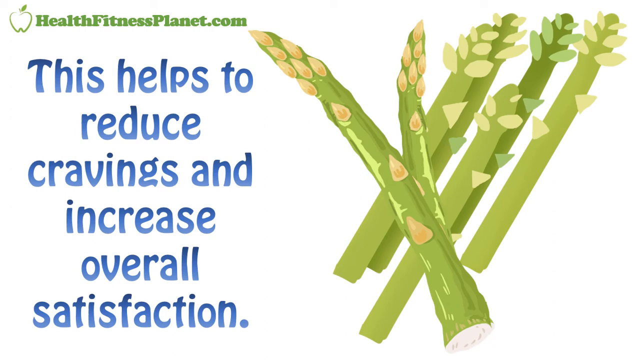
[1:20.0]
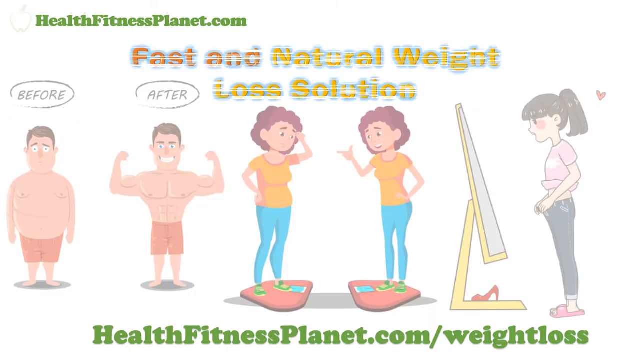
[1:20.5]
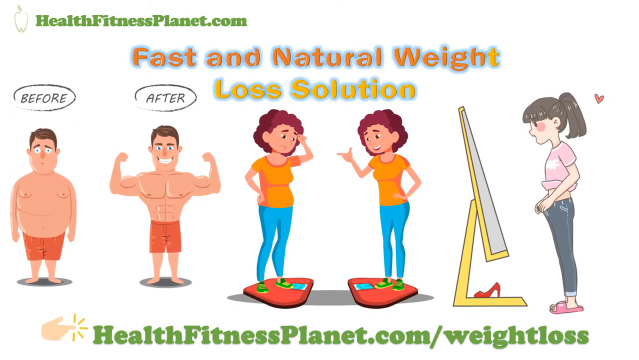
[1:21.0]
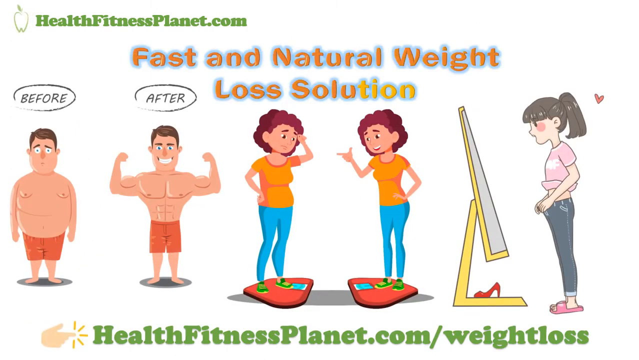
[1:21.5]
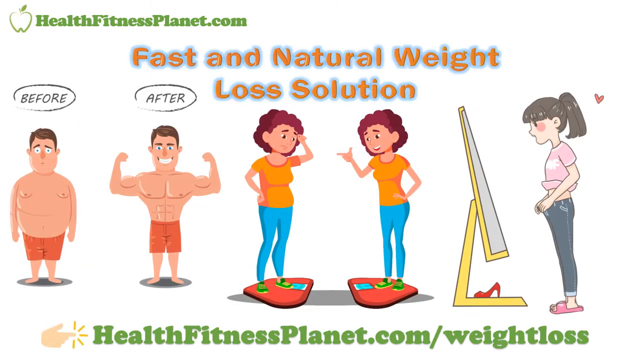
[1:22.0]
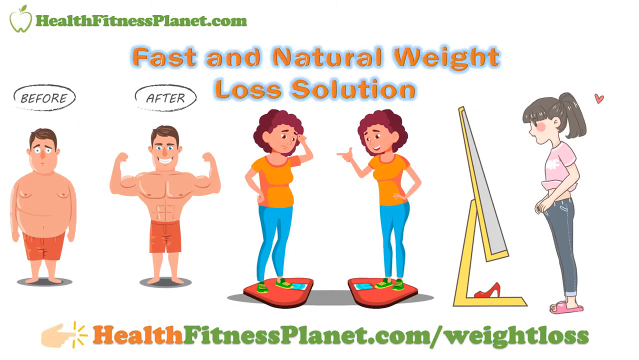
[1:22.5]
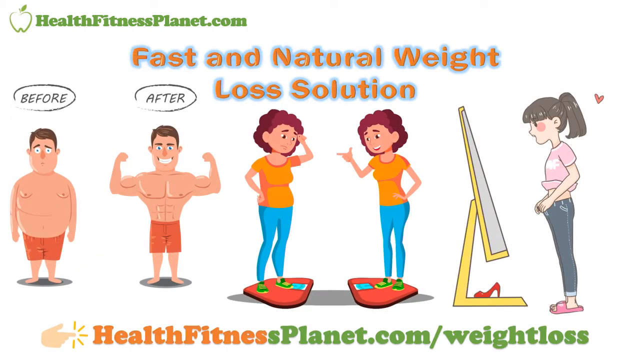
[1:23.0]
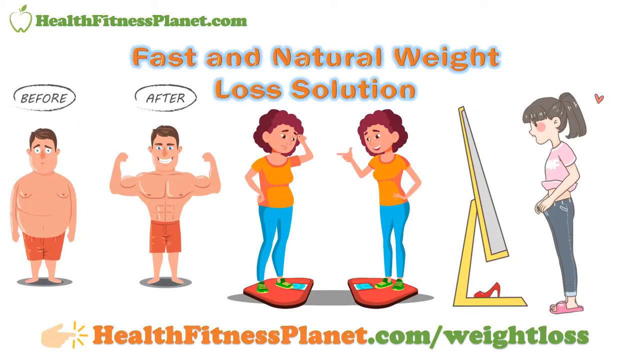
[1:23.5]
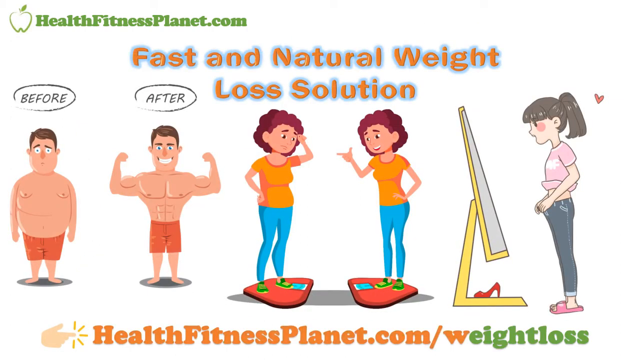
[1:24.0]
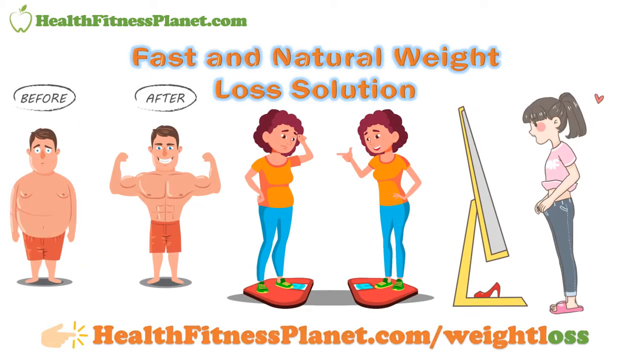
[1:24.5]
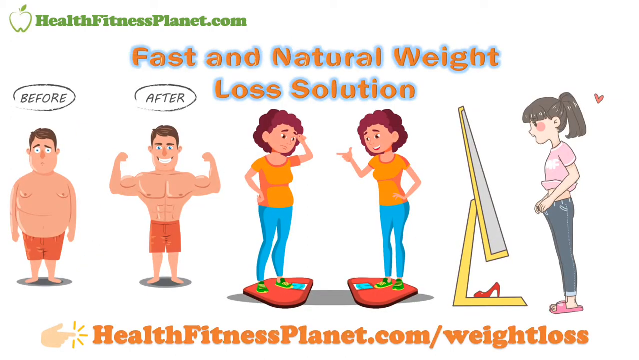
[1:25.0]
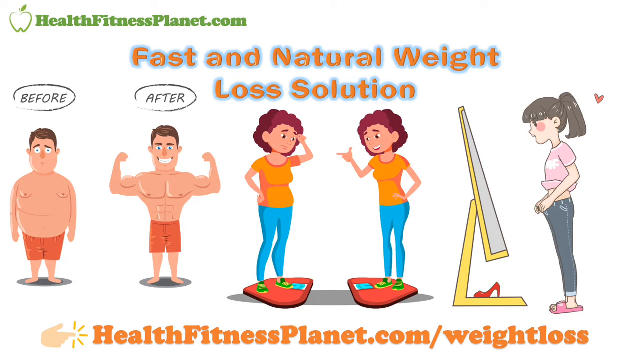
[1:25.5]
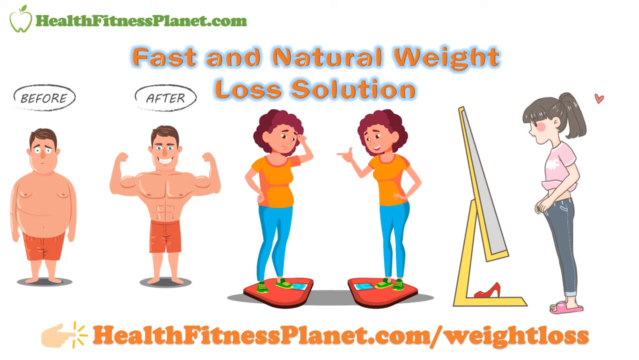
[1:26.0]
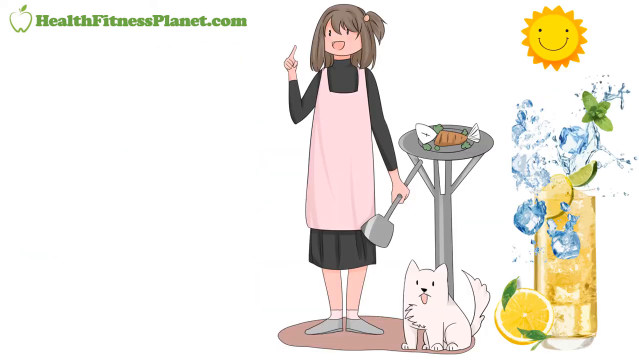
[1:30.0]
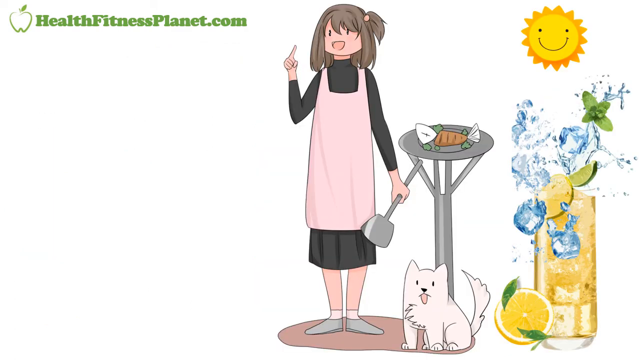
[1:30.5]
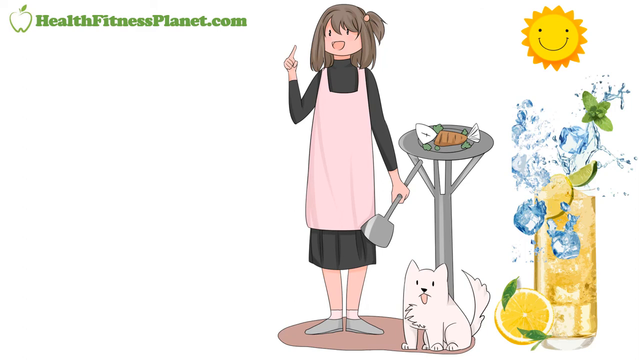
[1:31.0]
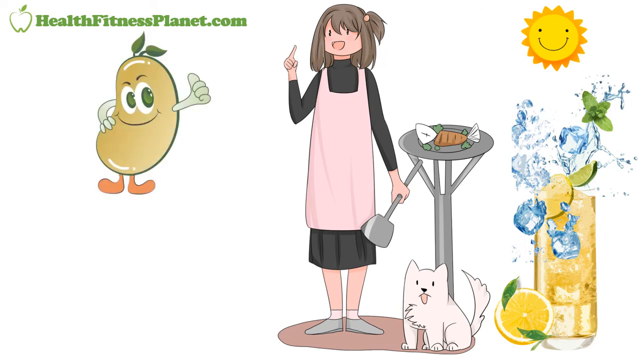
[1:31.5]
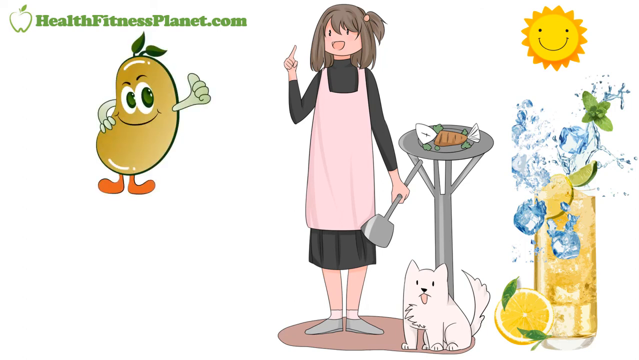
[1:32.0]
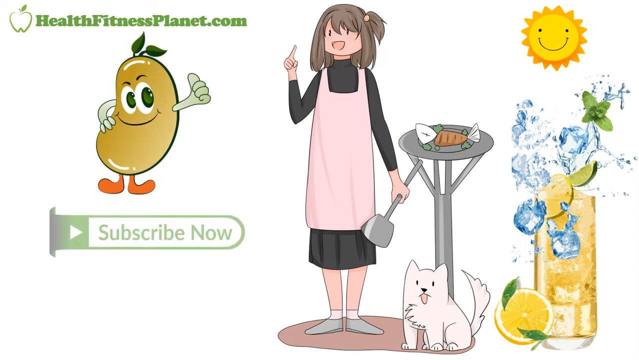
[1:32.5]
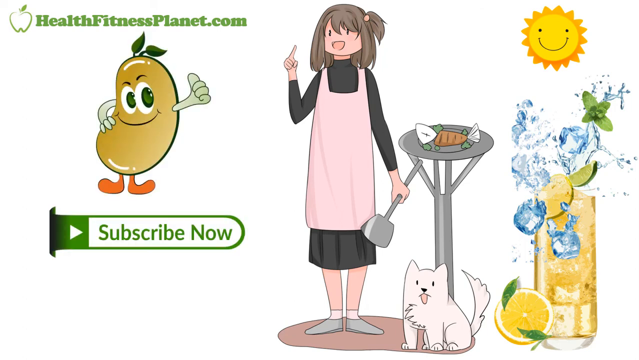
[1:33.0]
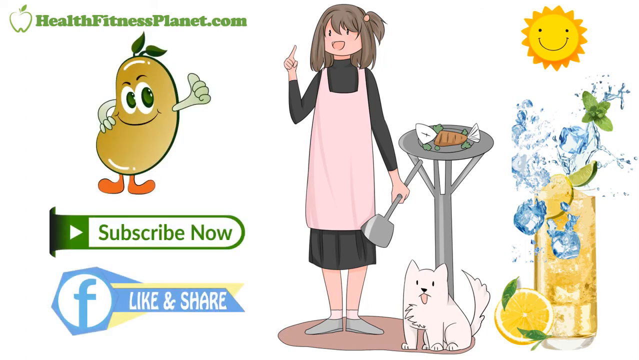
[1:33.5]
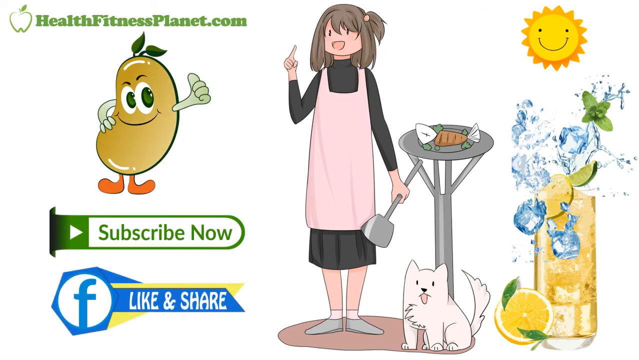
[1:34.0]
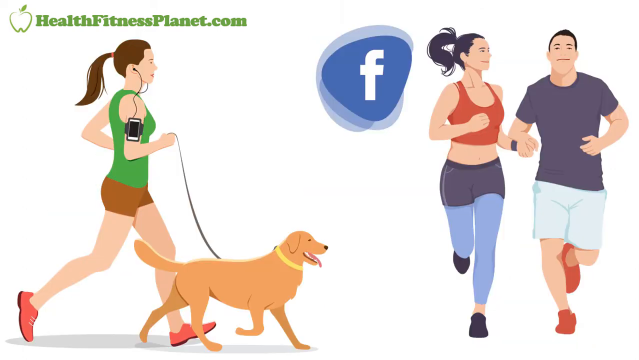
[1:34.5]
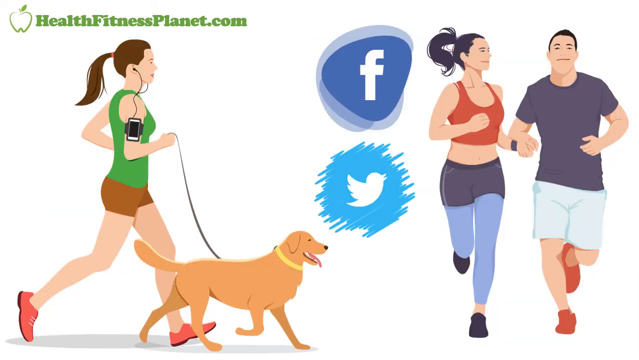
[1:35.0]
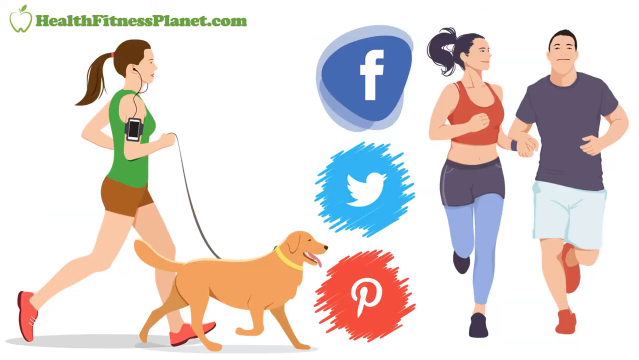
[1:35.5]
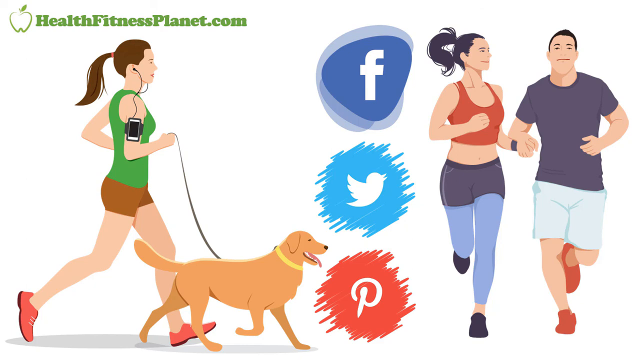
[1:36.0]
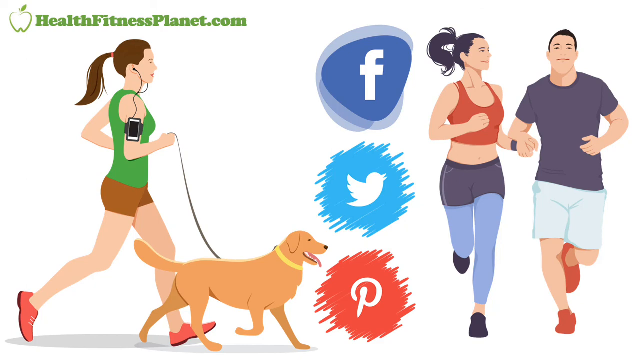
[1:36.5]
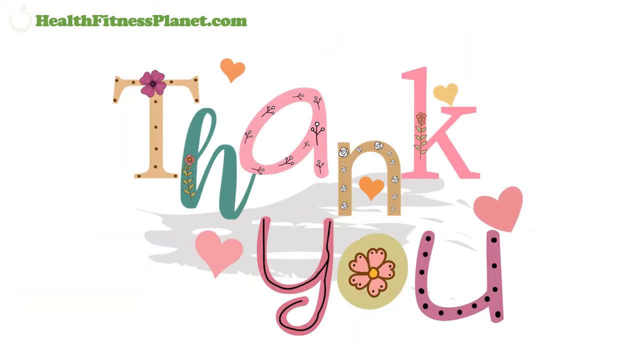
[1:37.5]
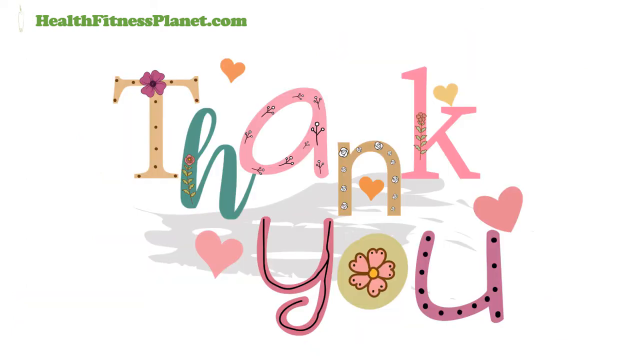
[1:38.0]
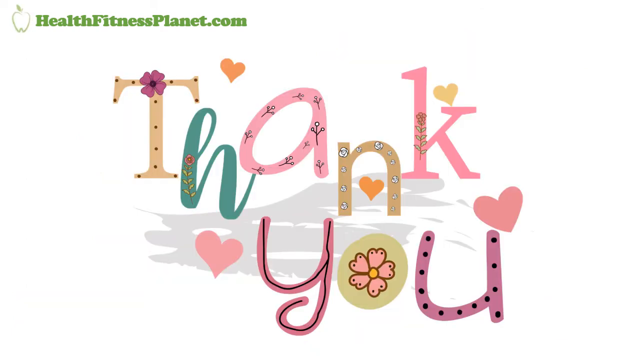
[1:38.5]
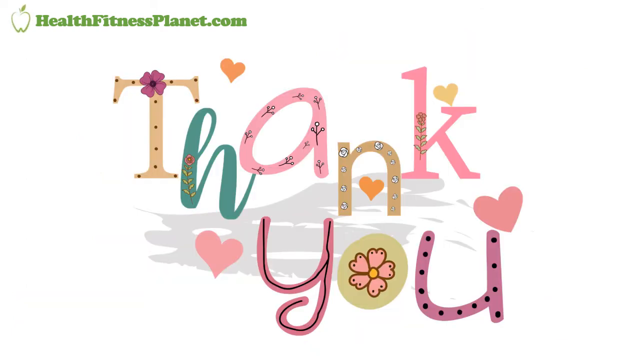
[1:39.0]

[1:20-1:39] A cartoon drawing at the top is labeled "Fast and natural weight loss solution," with five cartoon figures below. On the far left are two illustrations of the same man, with "before" and "after" above their heads from left to right. The before picture shows a man with a huge belly wearing swimming trunks, with an unhappy expression; under the after tag is the same man with a well-defined torso, flexing his arms with a big smile. In the center are the two figures of the women from the beginning of the video, in orange shirts and blue pants, standing on two sides of a scale that is now equal. On the right is a young girl with a dark ponytail, seen in profile, wearing a pink shirt and gray pants and holding out the waistband of the pants to show how much weight she has lost. She stands in front of a mirror on which stands a single red high heel, and there is a little heart next to her ponytail. The image then switches to healthfitnessplanet.com with the apple logo, below which is a cartoon bean with arms, eyes, a smile, and little red feet. On the right side of this image is a woman in a black dress with a pink apron over it, holding her right hand up and a shovel in her left hand; on a table next to her is a carrot, and a white animal, a dog or a cat, is below the table. On the far right are a drawing of sunshine and a picture of a glass of iced tea with limes, mint, and ice splashing out of it. The last image shows a cartoon of a woman jogging with a golden retriever on the left, the logos for Facebook, Twitter, and Pinterest in the center, and a cartoon of a woman with a dark ponytail and a man jogging together on the right. The last page says "Thank you" in letters of all different colors, with hearts and flowers.